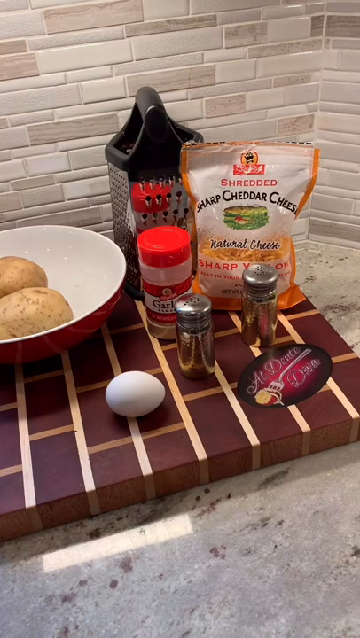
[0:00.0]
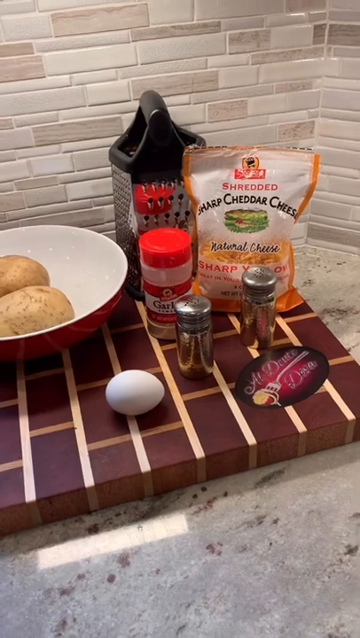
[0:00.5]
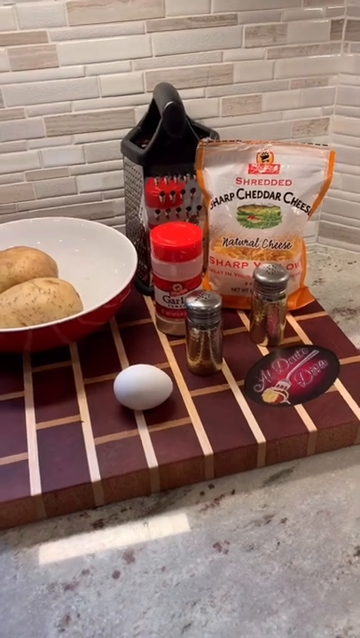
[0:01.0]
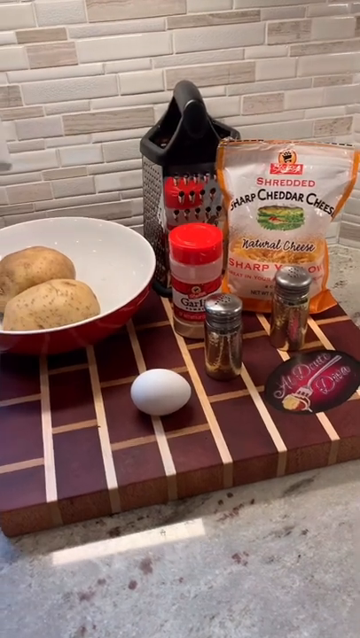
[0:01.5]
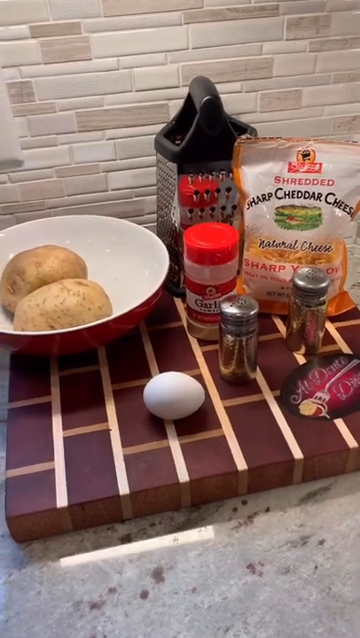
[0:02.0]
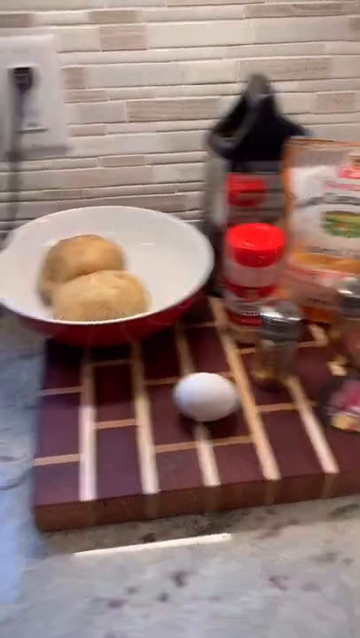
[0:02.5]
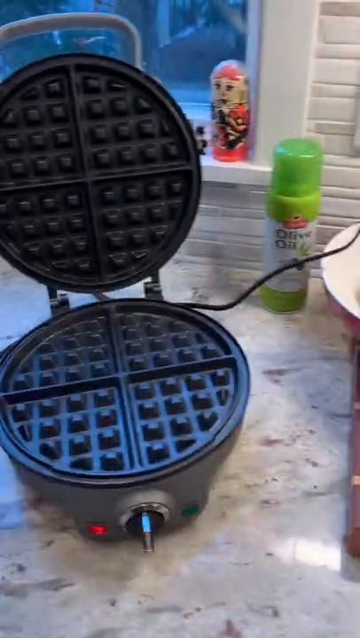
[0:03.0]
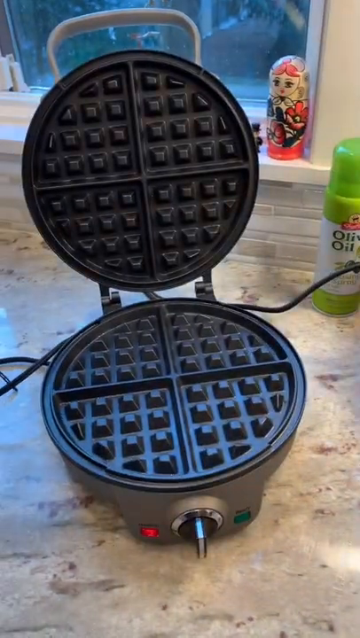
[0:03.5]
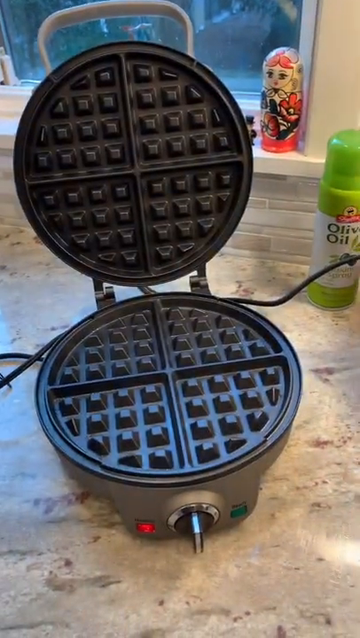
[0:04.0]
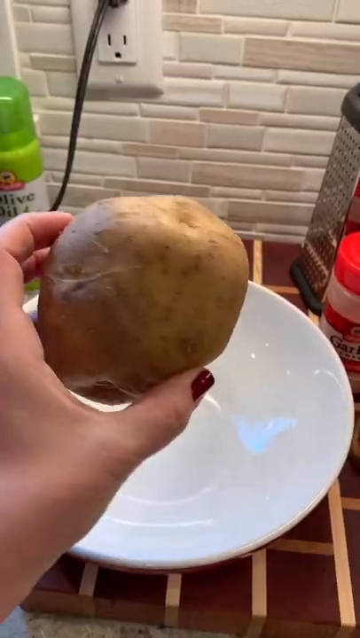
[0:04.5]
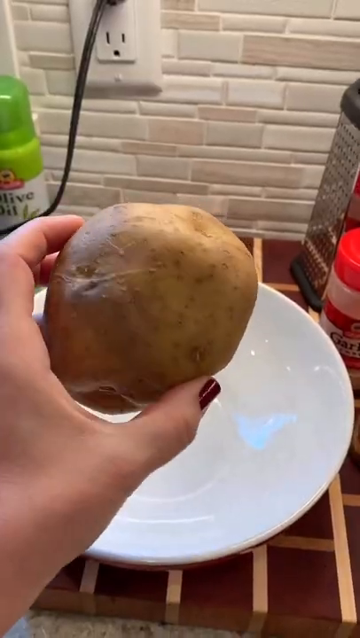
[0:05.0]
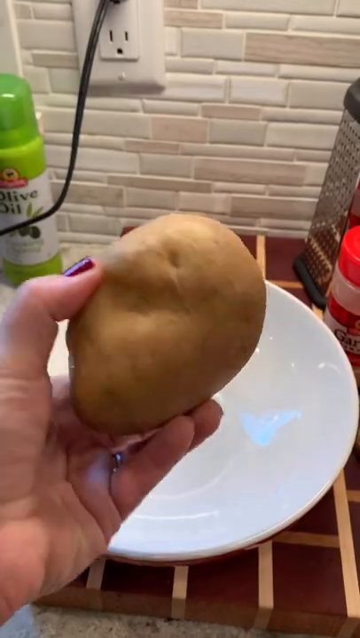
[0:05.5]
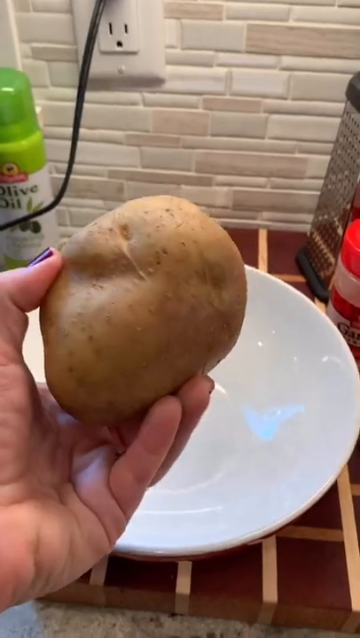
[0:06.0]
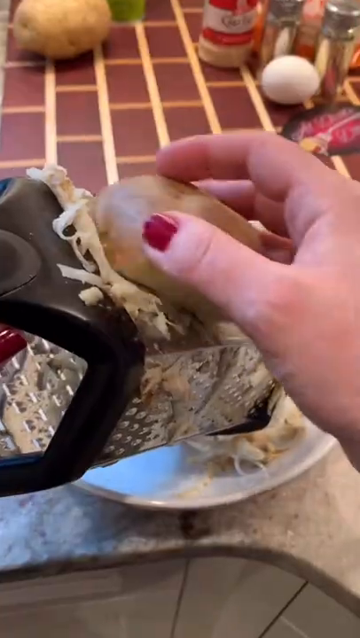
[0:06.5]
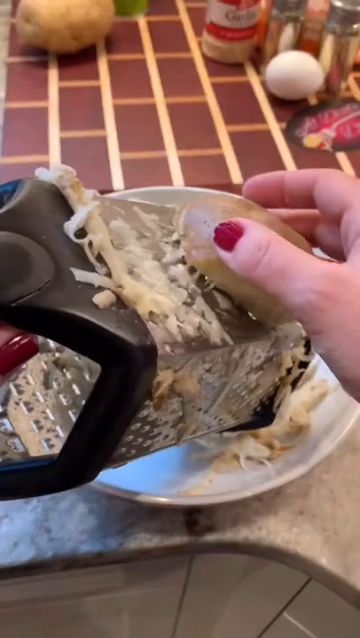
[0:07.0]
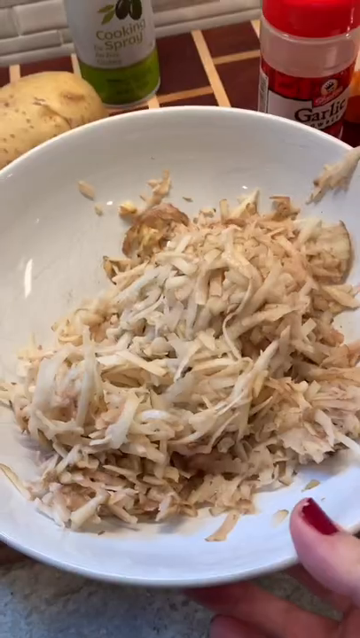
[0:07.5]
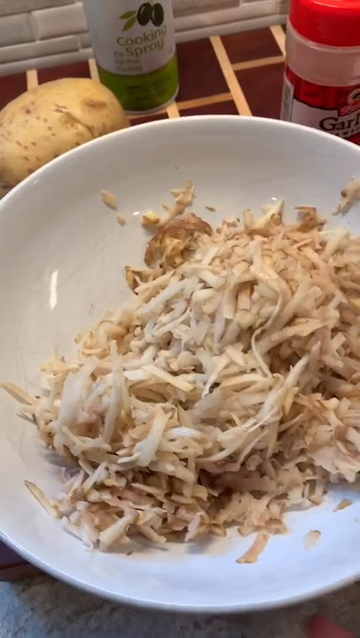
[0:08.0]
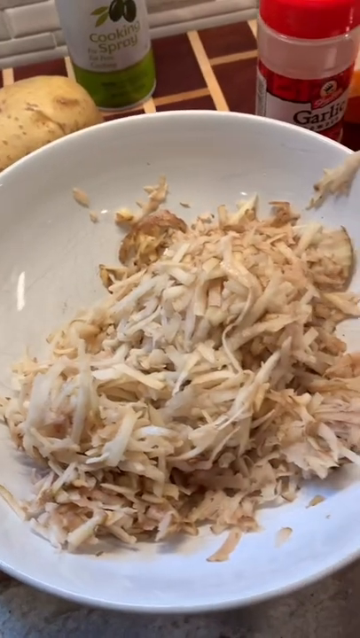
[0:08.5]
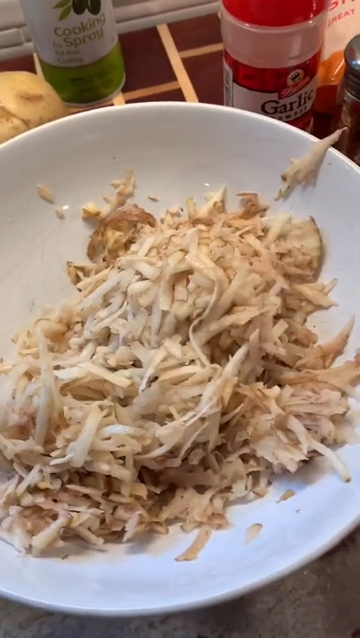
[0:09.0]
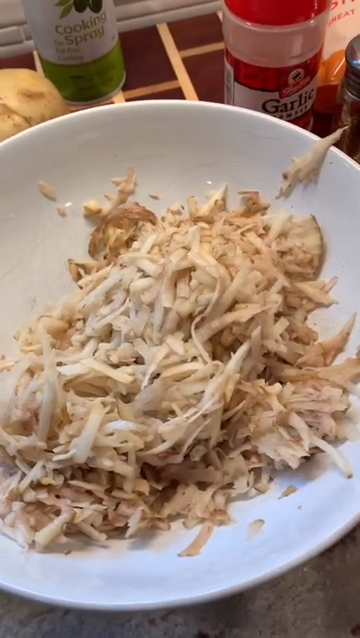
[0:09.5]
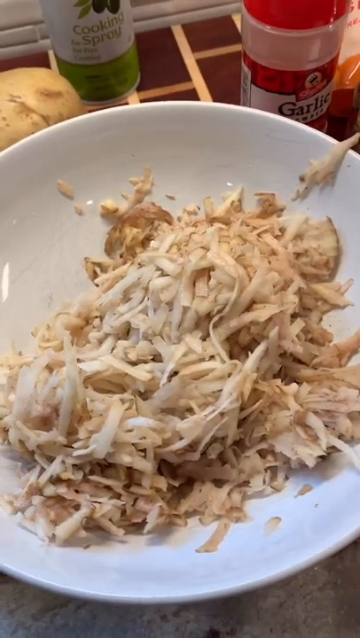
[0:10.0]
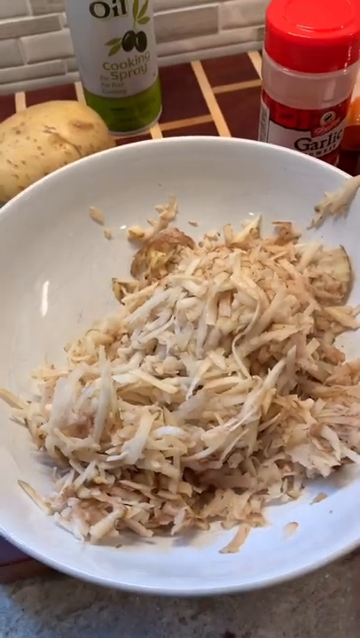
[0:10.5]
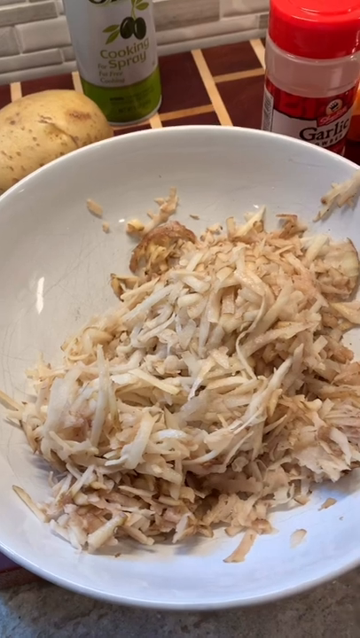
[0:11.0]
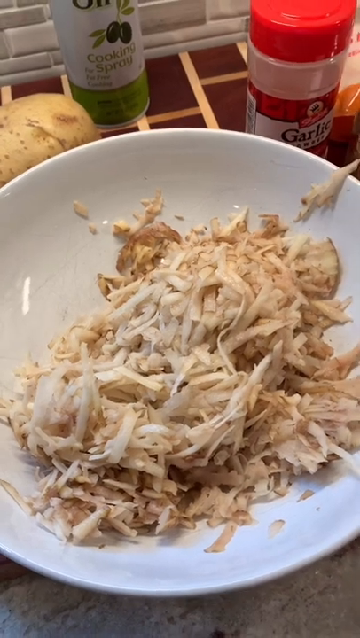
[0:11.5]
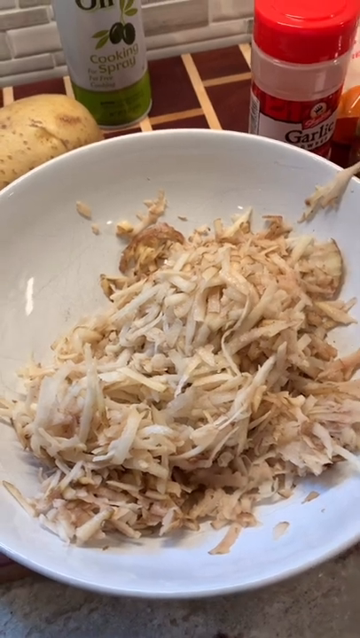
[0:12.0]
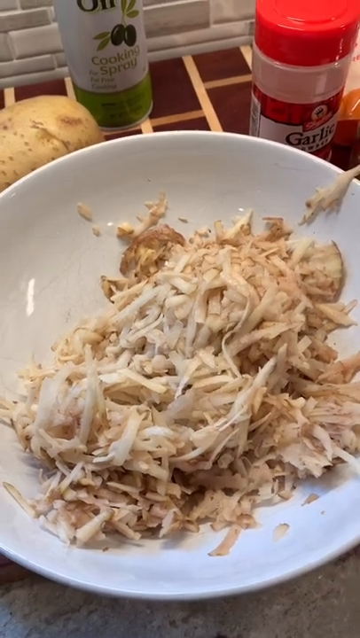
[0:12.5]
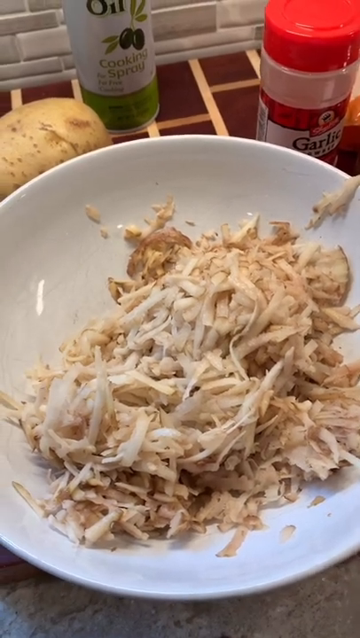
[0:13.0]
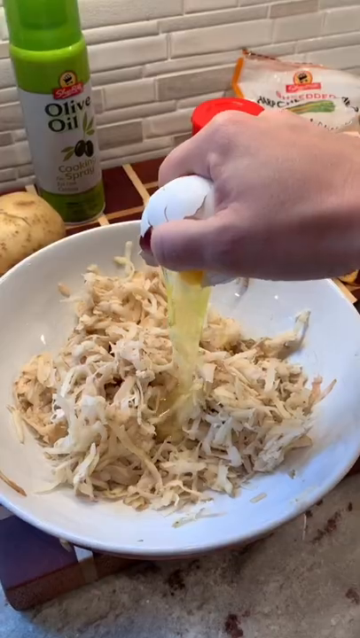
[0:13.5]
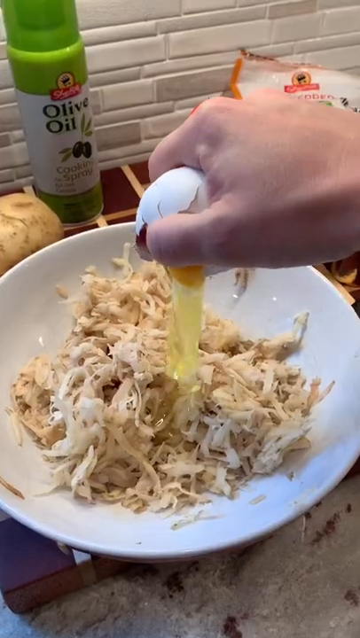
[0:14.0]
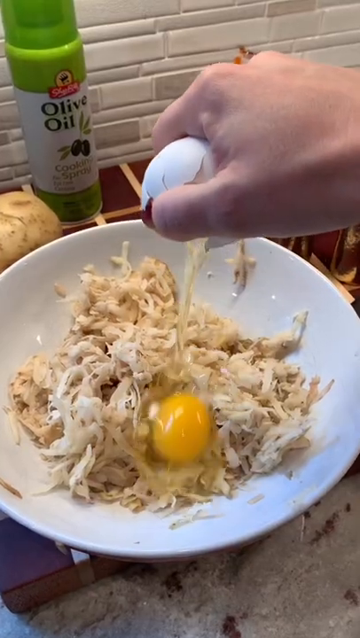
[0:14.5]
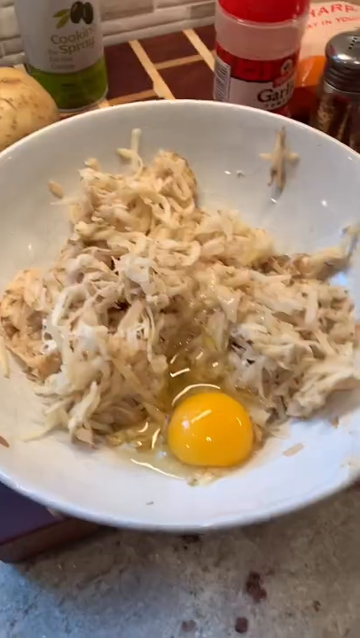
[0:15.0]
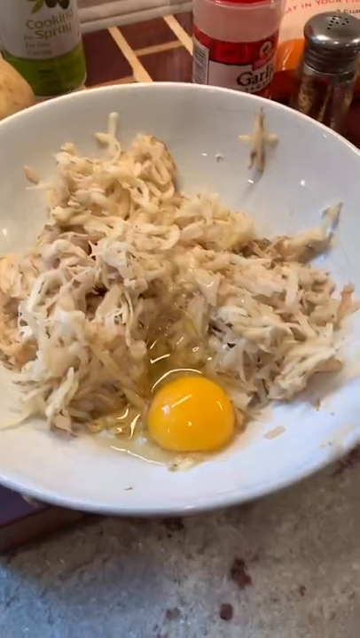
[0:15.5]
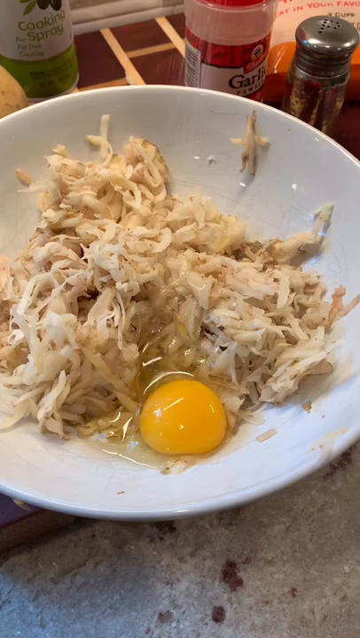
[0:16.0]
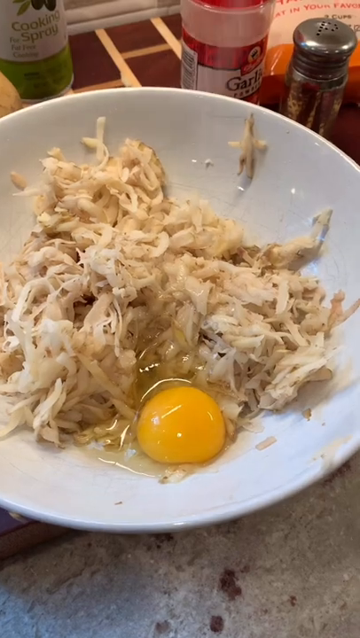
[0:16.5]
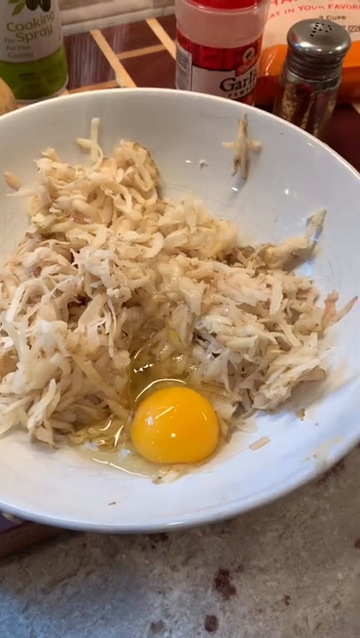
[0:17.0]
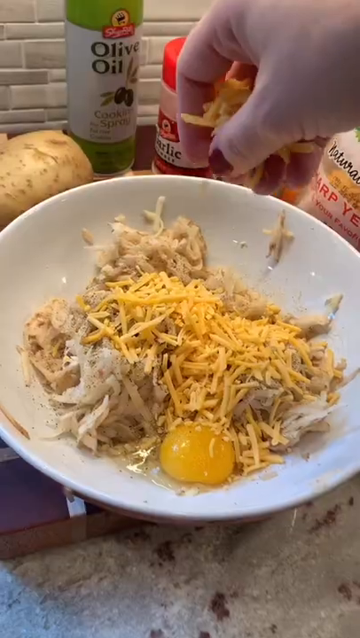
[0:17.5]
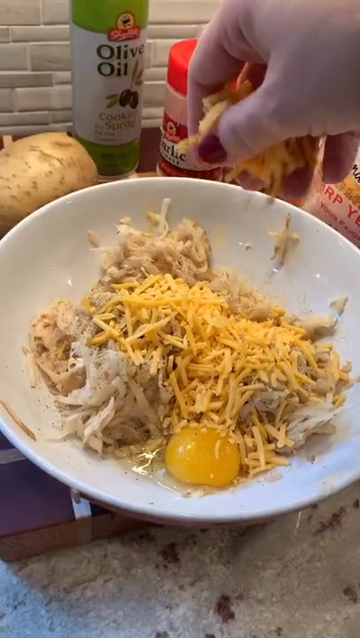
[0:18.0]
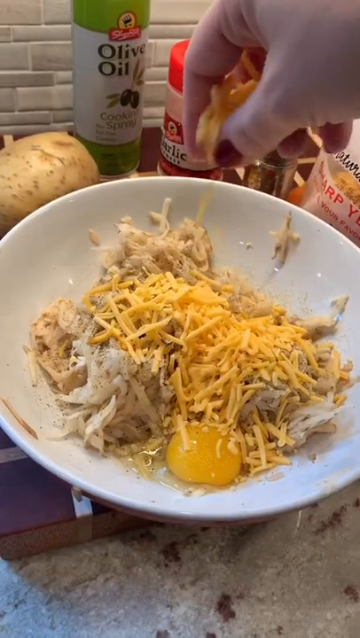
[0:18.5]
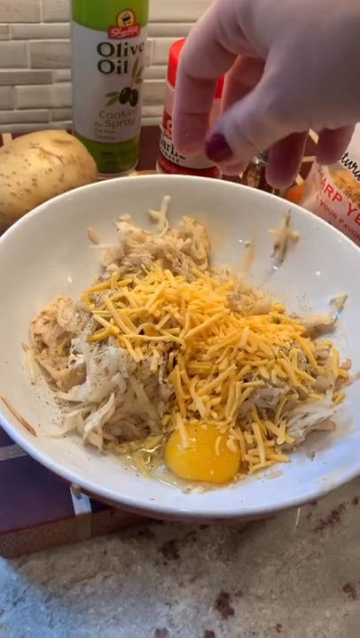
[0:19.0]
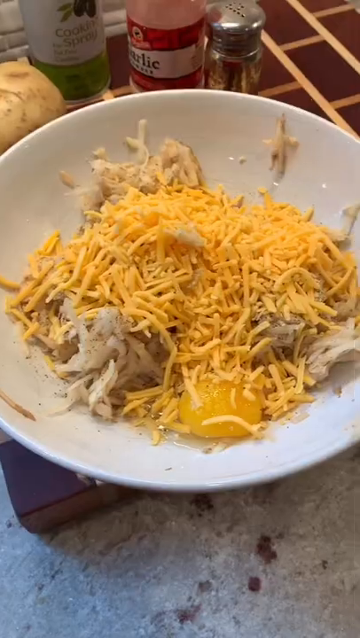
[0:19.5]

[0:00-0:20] The ingredients are laid out: grated potatoes, cooking oil, an egg, a grater and some cheese, which is cheddar. There are two potatoes and only one egg, and the potatoes have not had their skin removed. A waffle machine is also there, suggesting the potatoes will apparently be made into waffles.